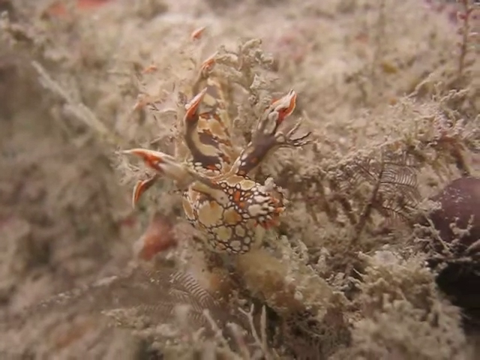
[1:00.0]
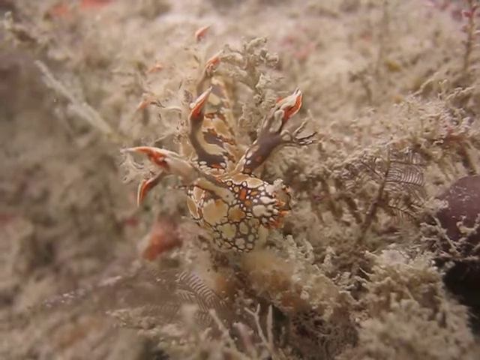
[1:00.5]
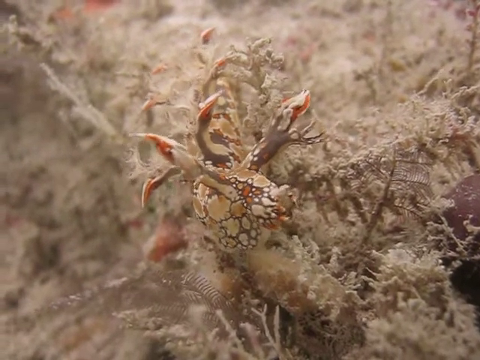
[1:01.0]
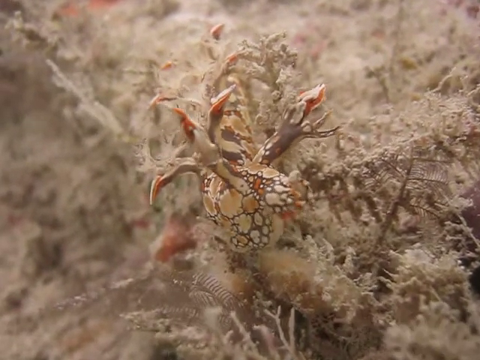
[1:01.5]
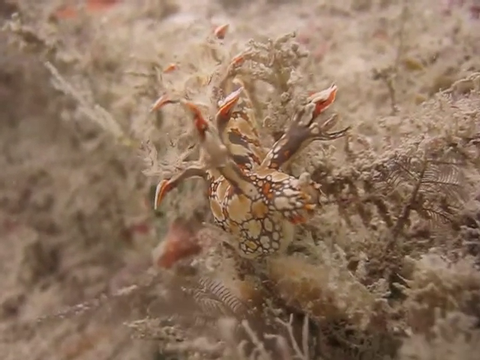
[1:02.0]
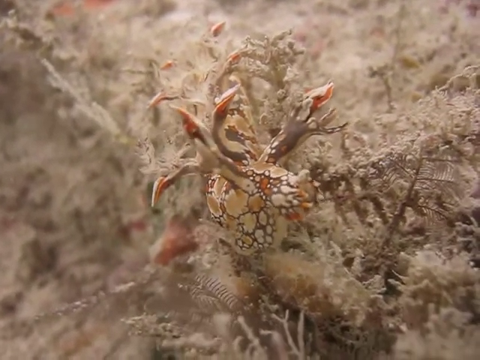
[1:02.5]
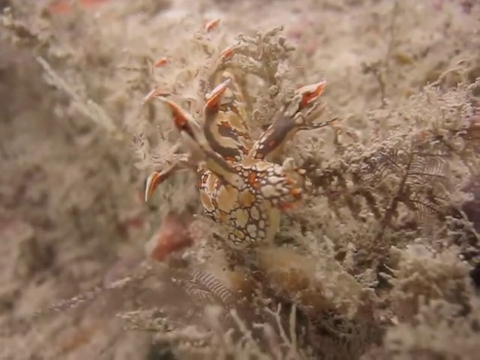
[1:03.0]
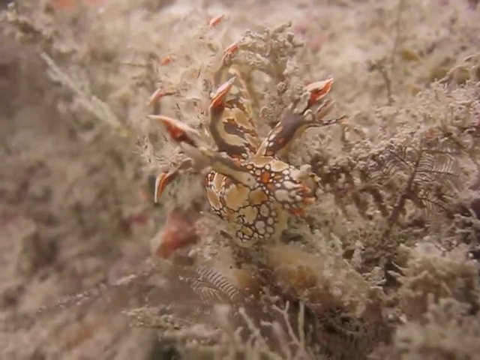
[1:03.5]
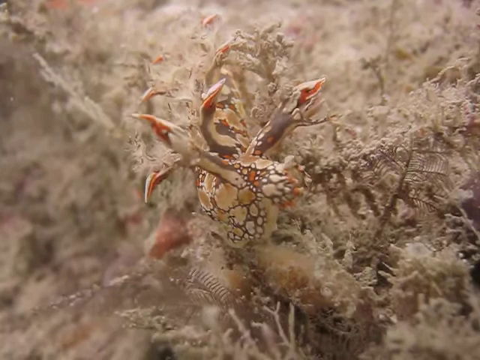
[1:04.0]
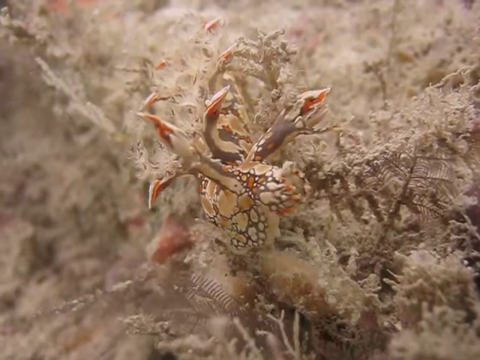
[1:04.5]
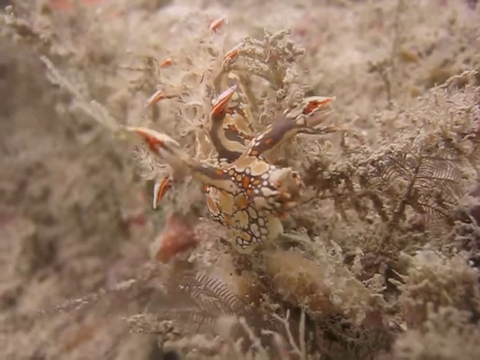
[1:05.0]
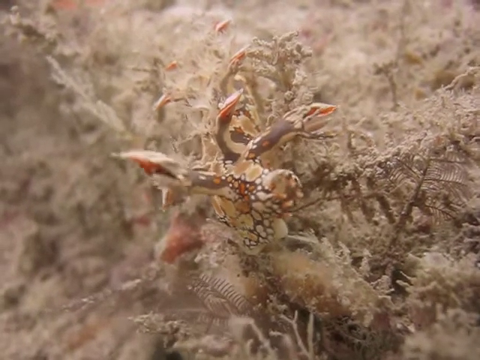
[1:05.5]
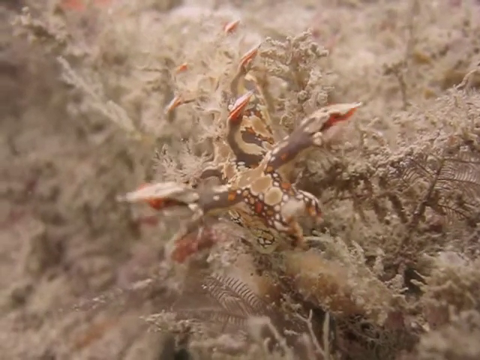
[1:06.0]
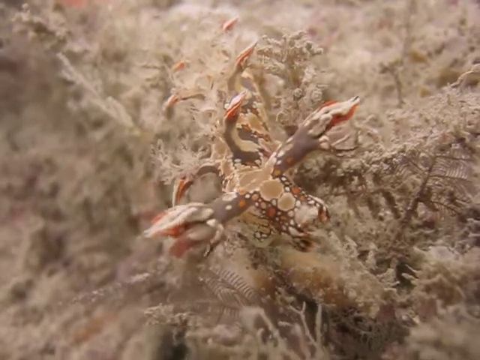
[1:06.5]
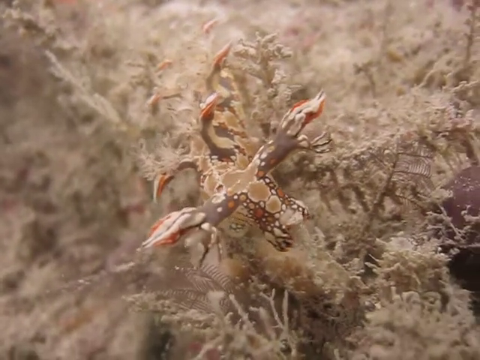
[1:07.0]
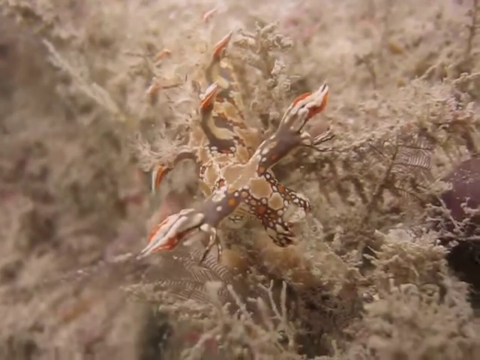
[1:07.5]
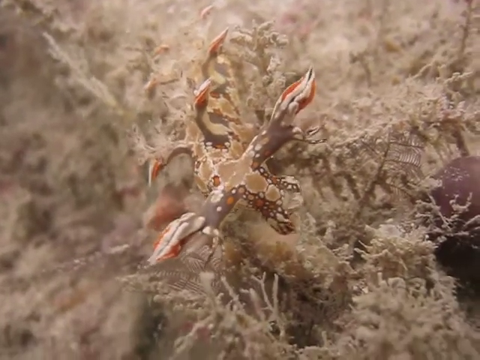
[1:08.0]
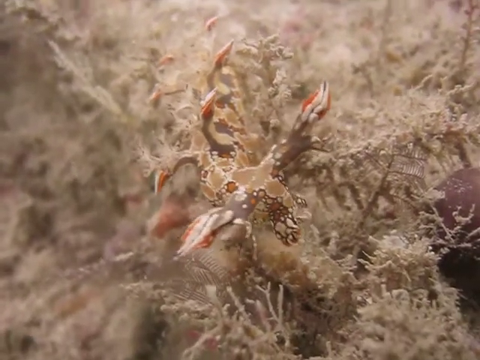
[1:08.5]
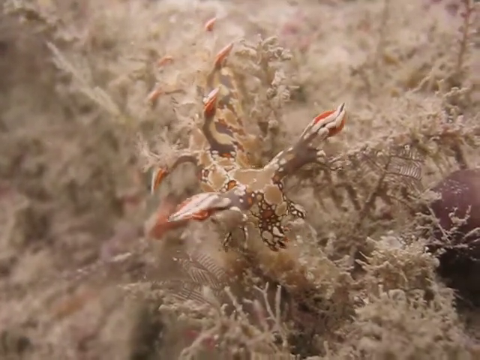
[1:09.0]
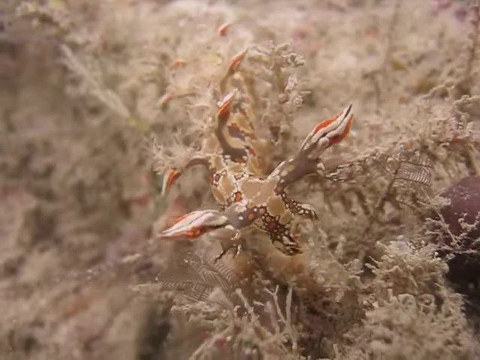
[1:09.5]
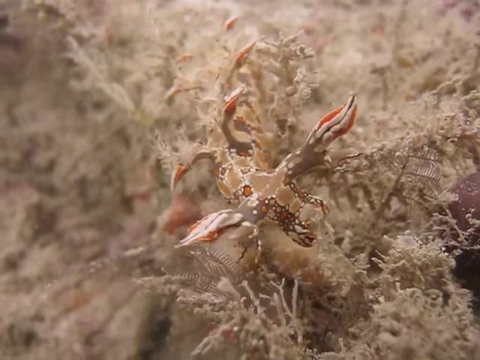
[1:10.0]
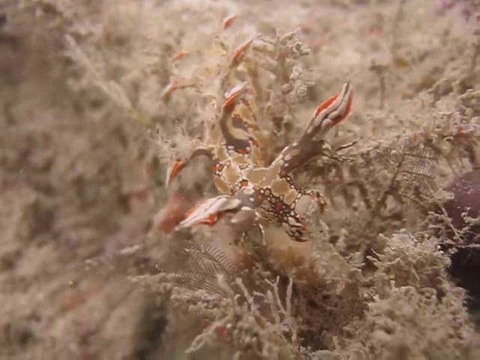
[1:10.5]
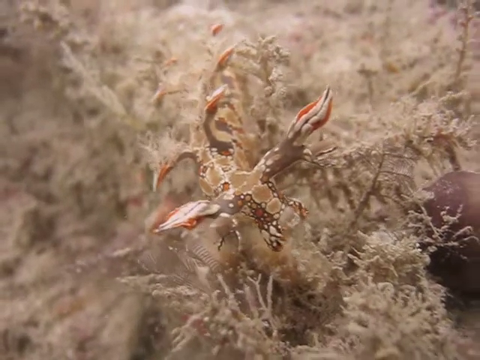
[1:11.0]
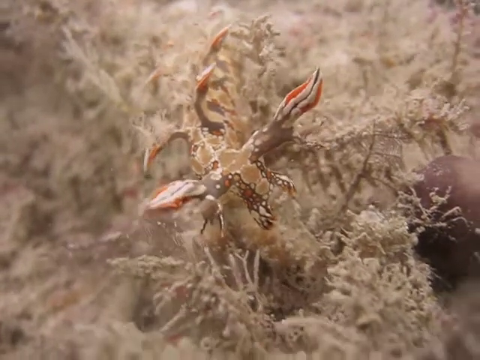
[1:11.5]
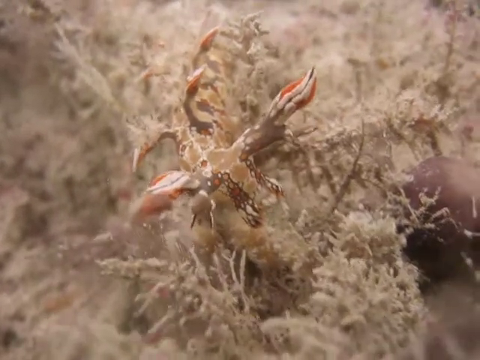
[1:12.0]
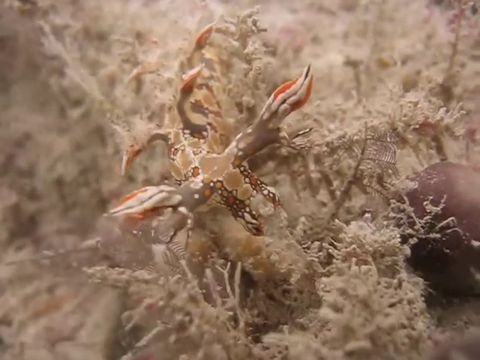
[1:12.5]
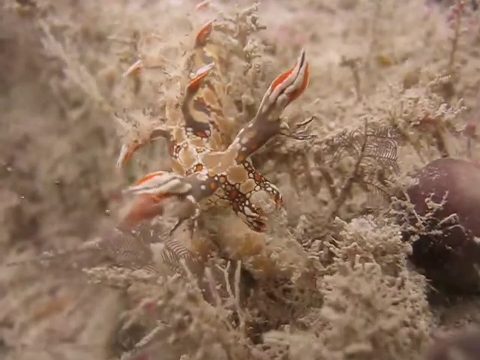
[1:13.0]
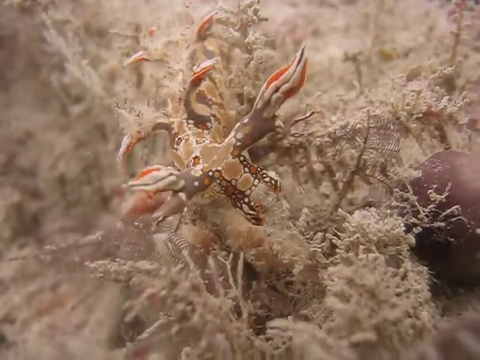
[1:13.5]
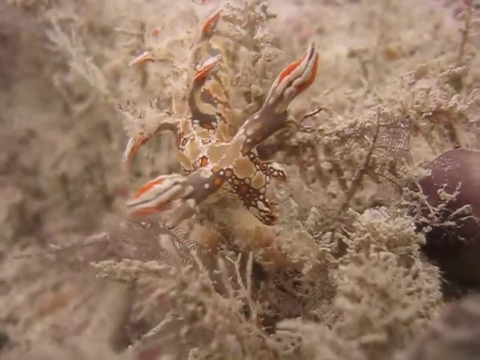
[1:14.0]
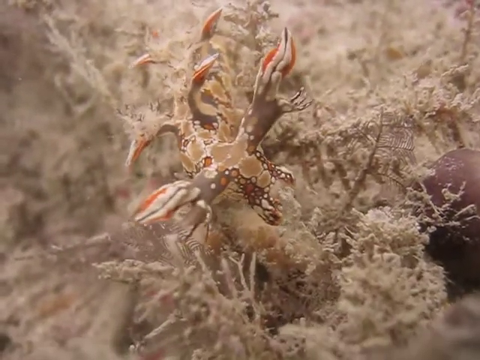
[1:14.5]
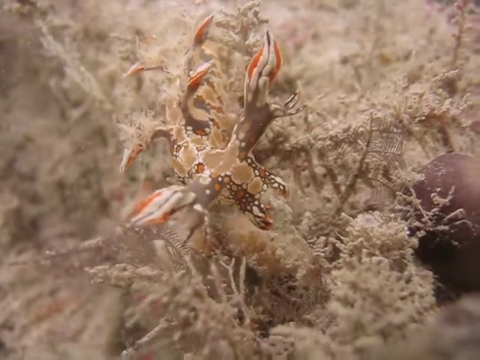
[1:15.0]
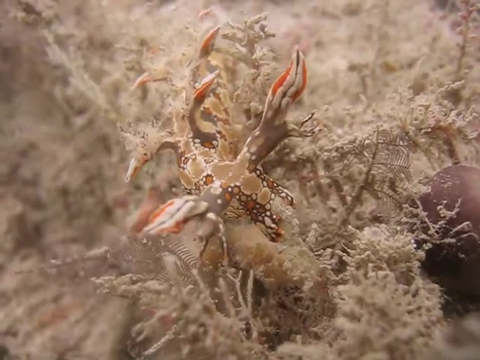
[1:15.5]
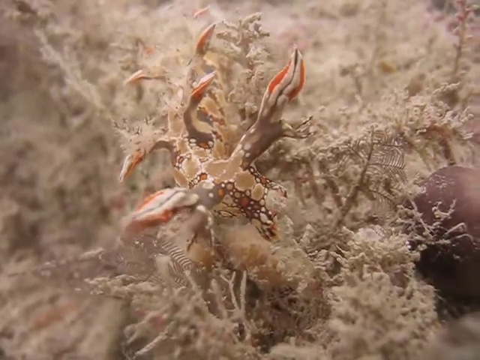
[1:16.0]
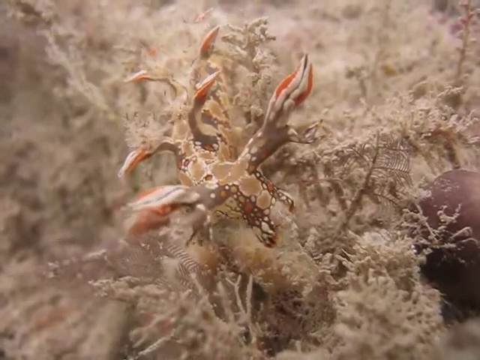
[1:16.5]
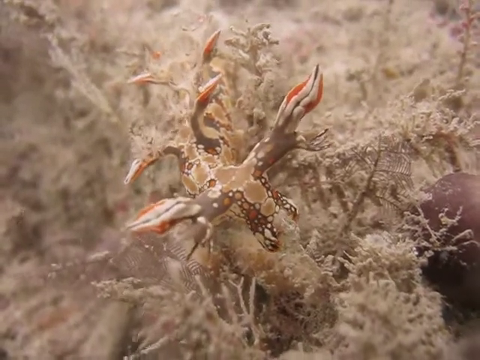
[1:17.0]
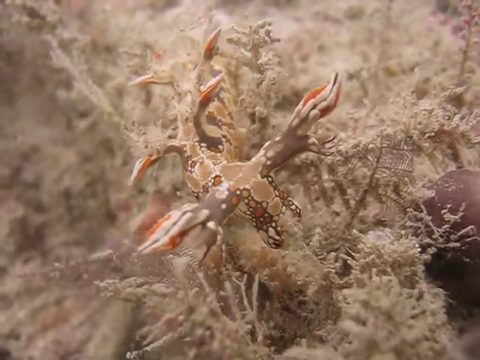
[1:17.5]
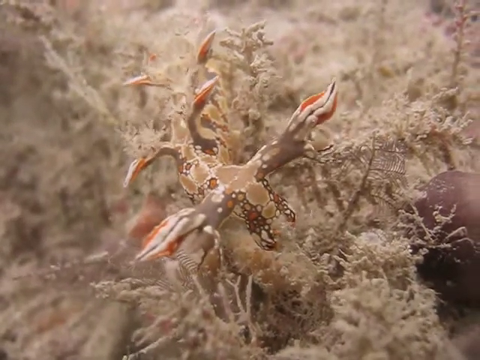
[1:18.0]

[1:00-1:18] A solitary ocean creature is on a bed of either coral or sponge at the bottom of the ocean, with a large rock-type feature beside it to the right. The creature is beige with areas of brown, gray, and orange and sort of has claw-like features on its body. It barely moves, making only simple, sort of swaying movements along with the ocean currents. The animal seems to be almost attached to the bed of coral, which is maybe its habitat on the ocean floor. It seems to just barely move and does nothing else. No other animals are visible besides this one creature.